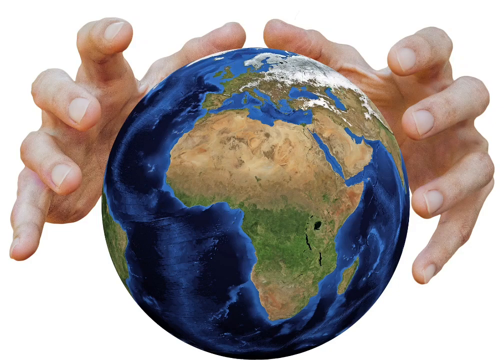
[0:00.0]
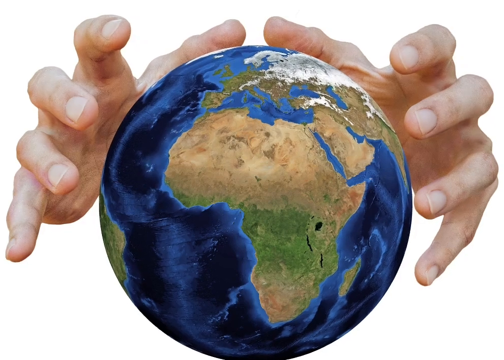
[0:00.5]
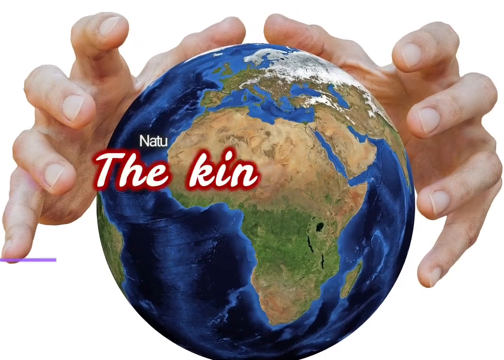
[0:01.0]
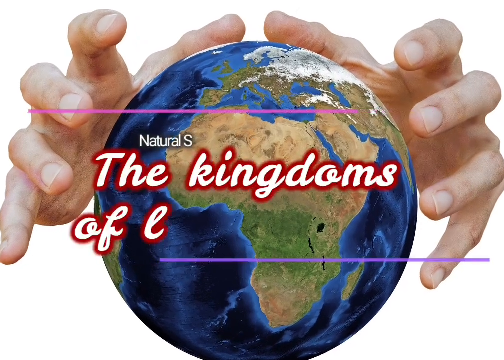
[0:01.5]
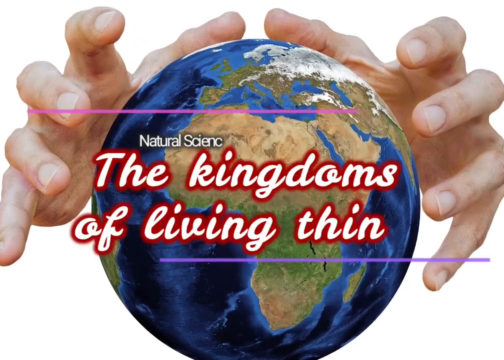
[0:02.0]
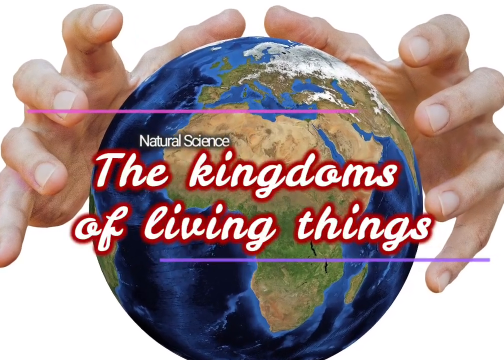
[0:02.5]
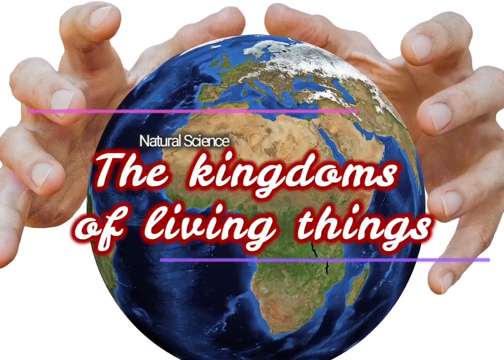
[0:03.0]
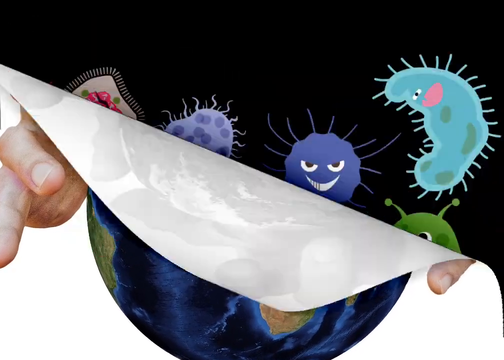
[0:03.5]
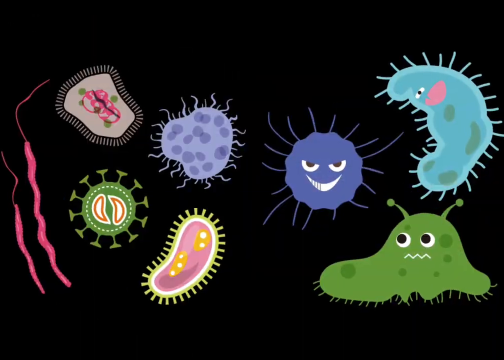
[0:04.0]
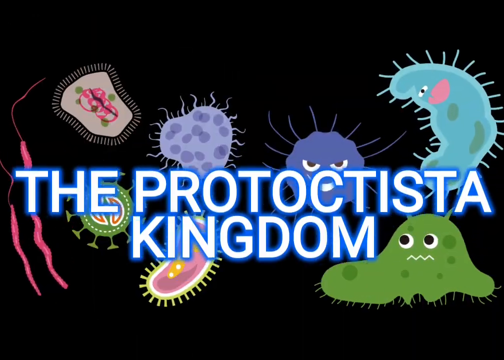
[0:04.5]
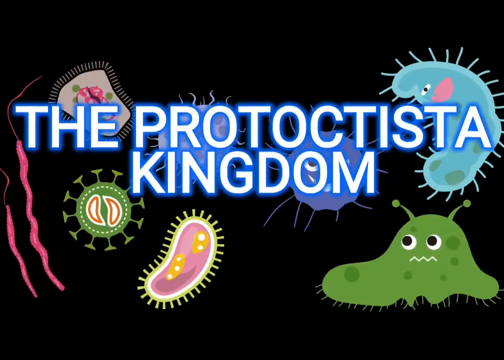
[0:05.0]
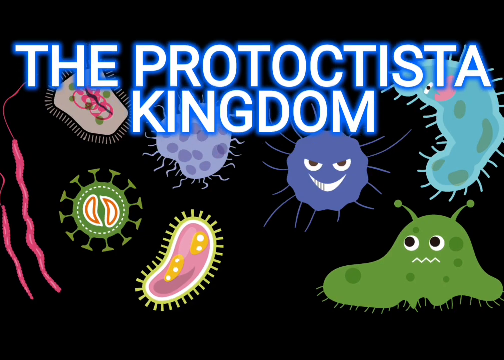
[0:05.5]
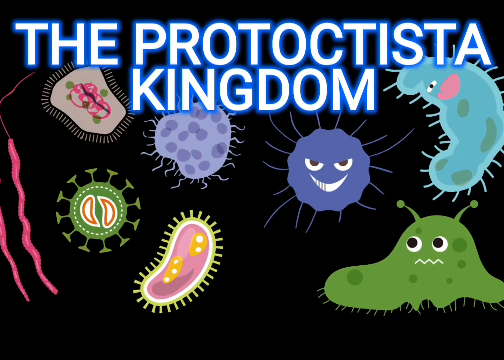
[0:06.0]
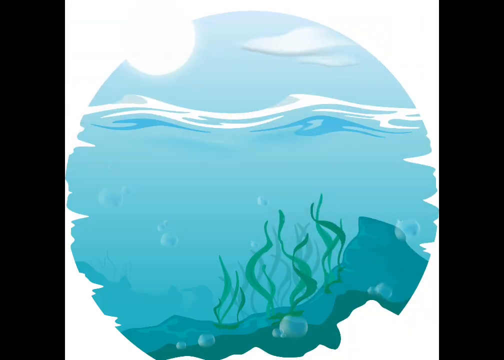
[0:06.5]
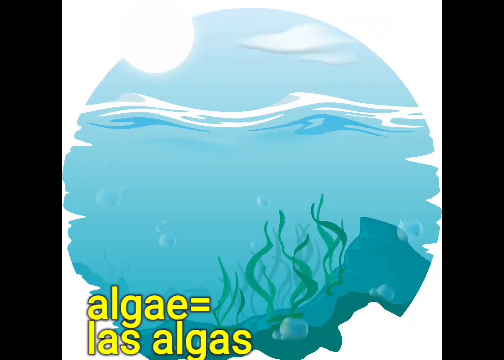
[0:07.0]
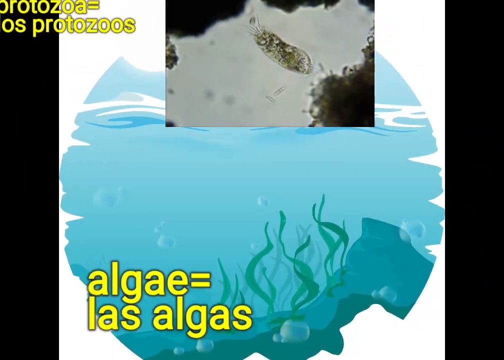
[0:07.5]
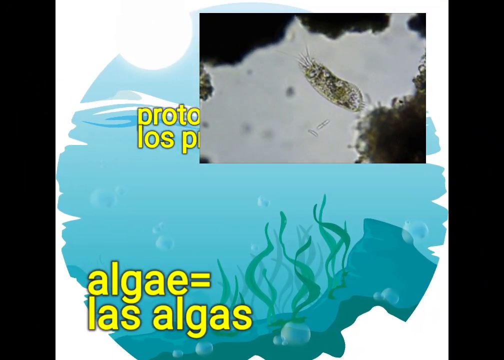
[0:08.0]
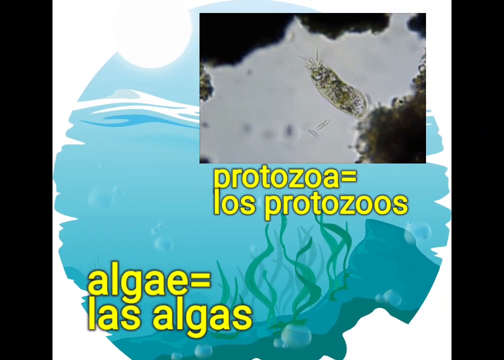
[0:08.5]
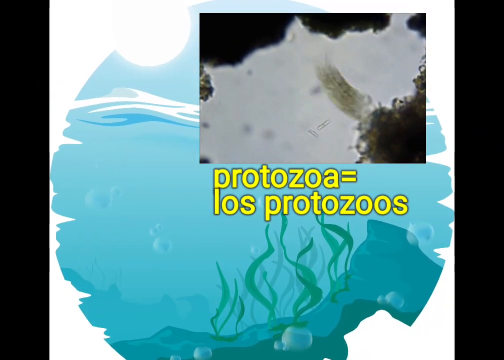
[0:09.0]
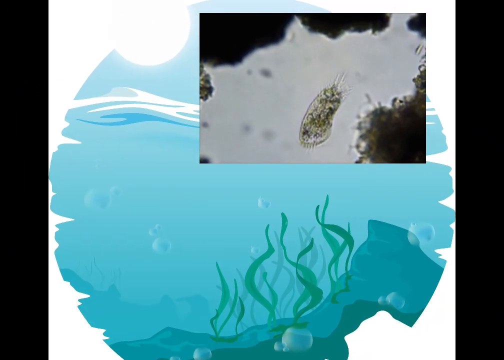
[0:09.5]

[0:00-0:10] The video opens with an intro showing giant hands on the earth, trying to dissect all the living creatures on earth.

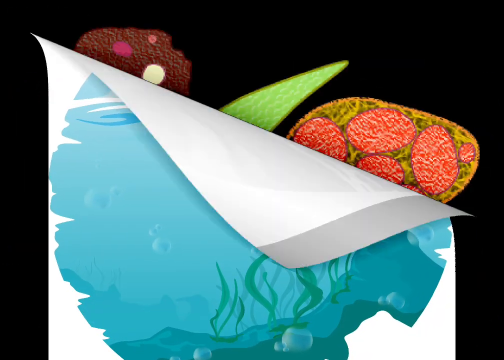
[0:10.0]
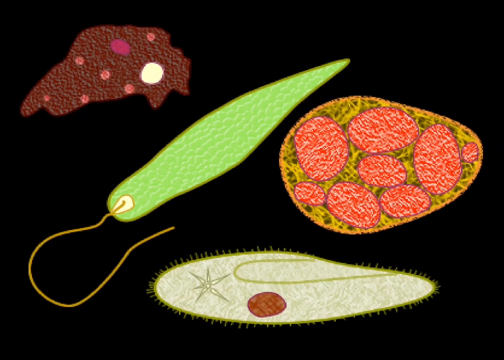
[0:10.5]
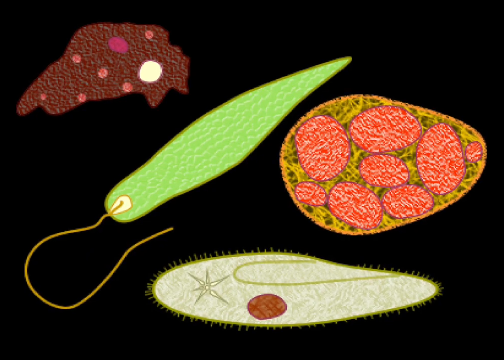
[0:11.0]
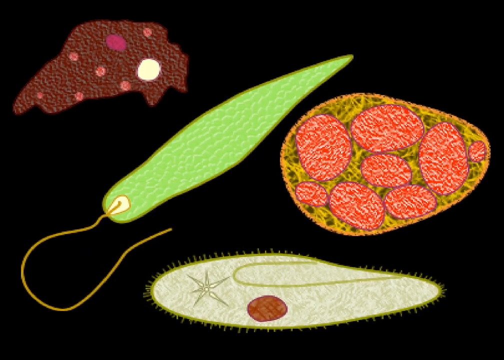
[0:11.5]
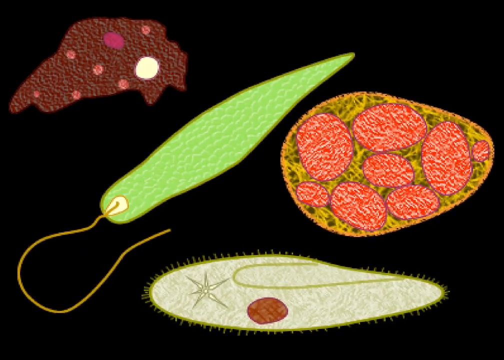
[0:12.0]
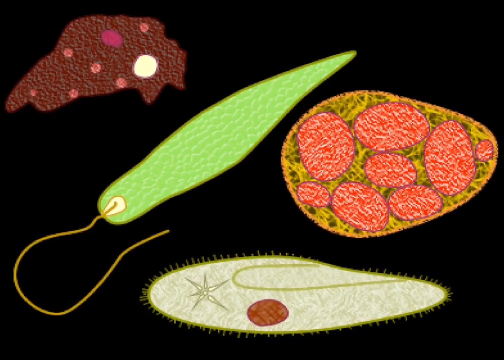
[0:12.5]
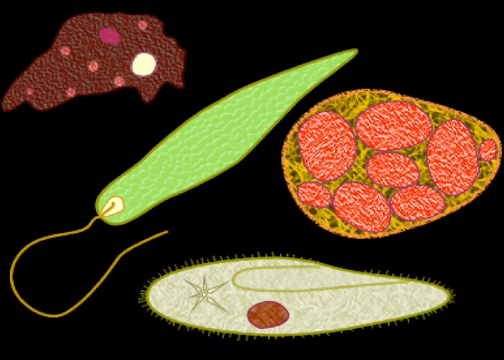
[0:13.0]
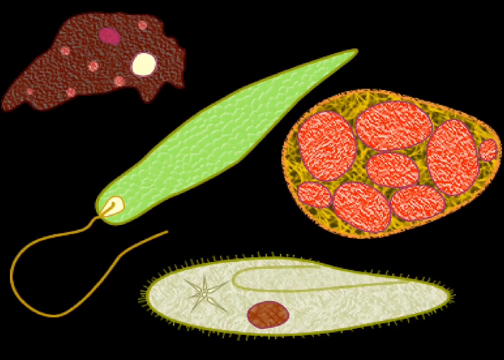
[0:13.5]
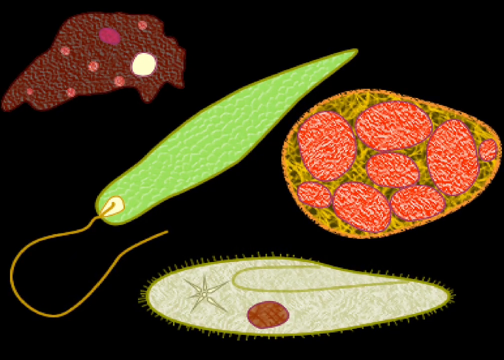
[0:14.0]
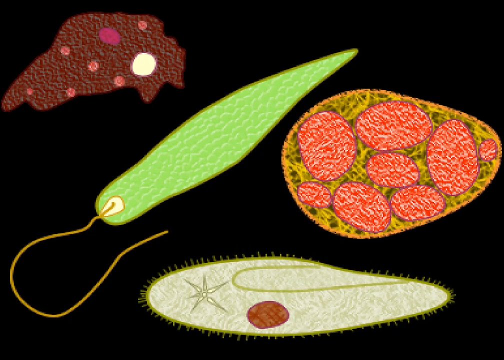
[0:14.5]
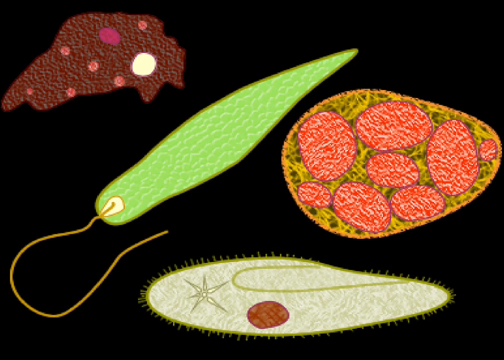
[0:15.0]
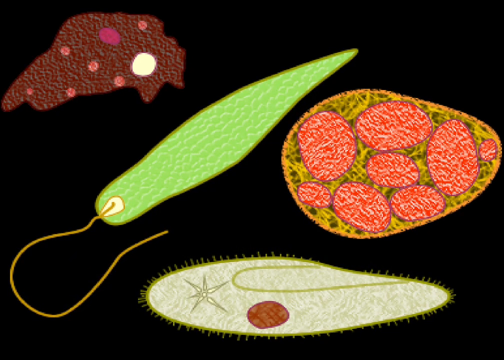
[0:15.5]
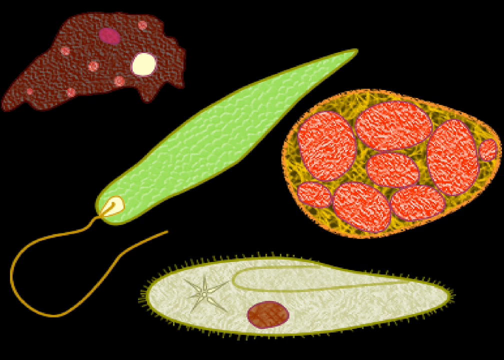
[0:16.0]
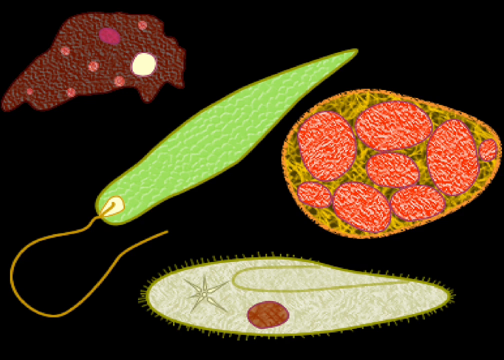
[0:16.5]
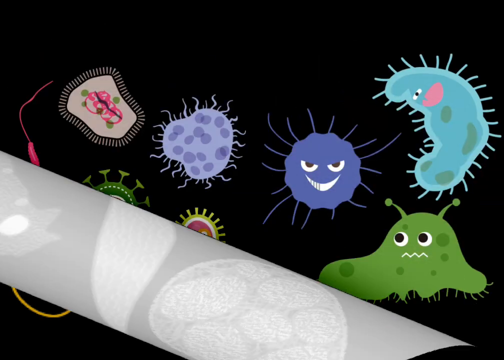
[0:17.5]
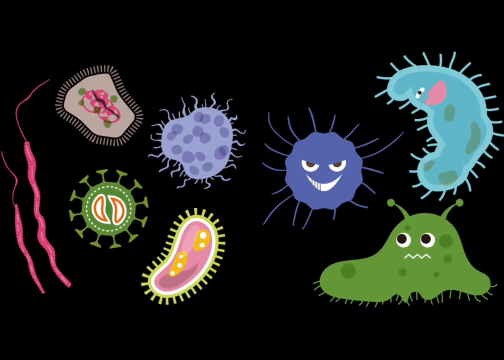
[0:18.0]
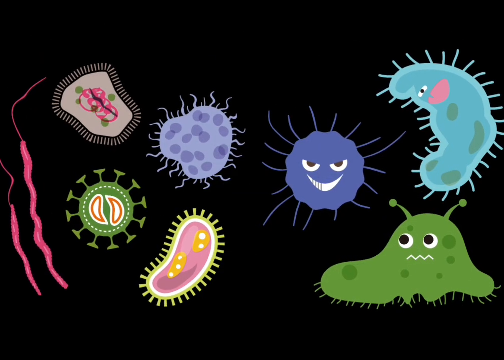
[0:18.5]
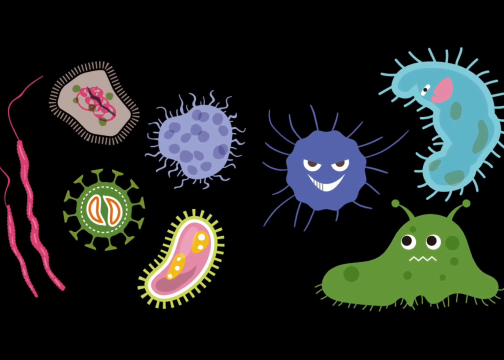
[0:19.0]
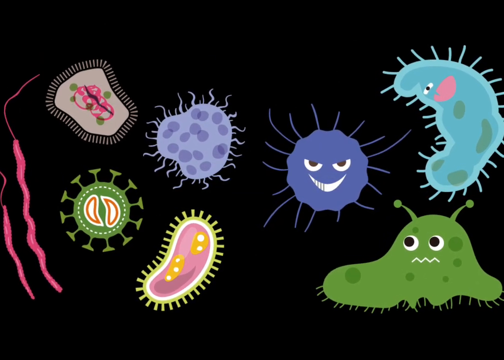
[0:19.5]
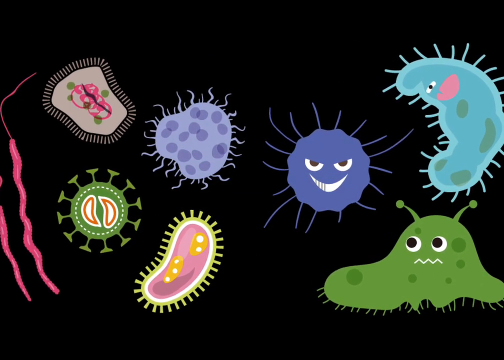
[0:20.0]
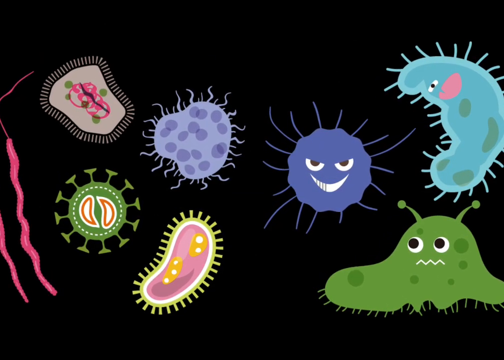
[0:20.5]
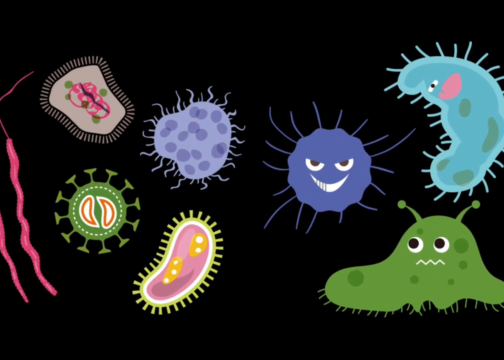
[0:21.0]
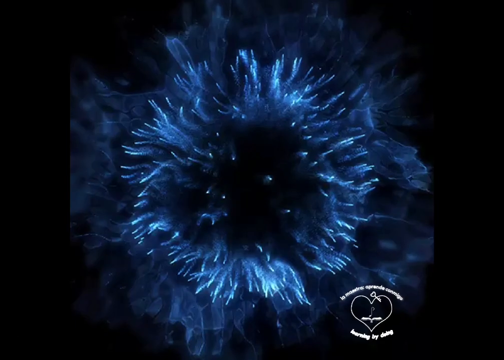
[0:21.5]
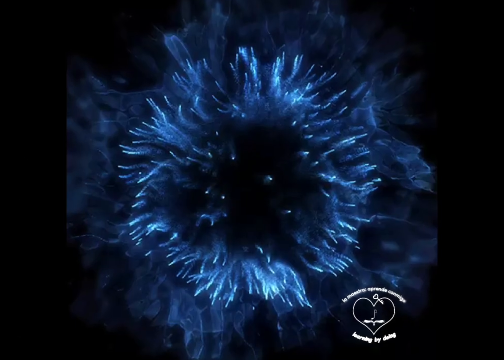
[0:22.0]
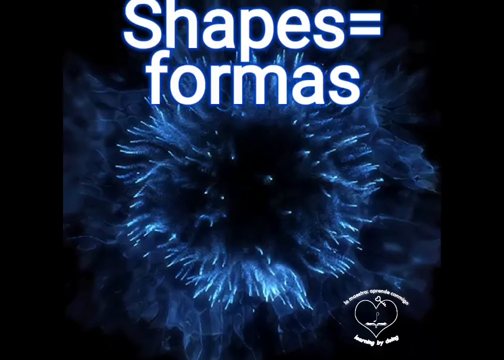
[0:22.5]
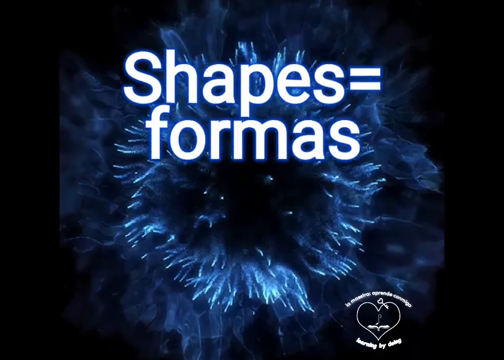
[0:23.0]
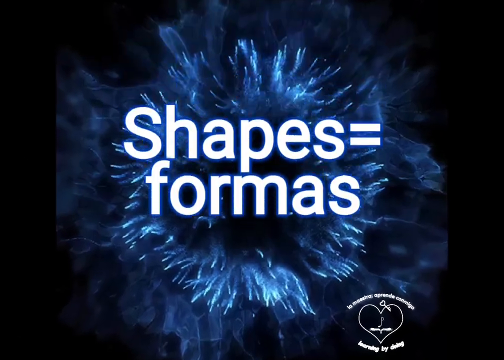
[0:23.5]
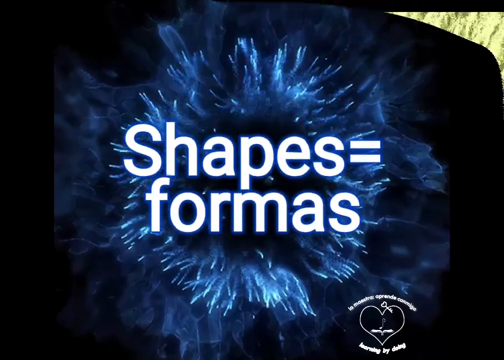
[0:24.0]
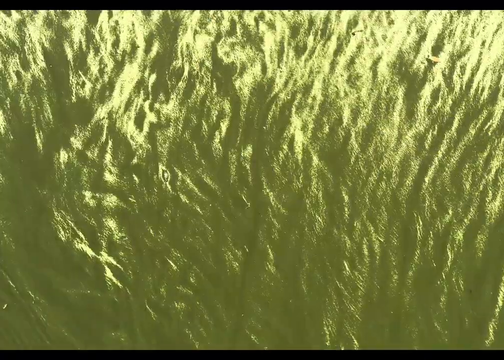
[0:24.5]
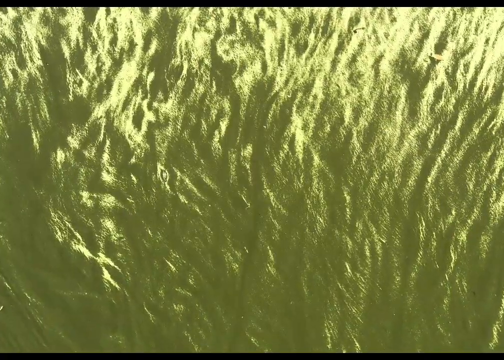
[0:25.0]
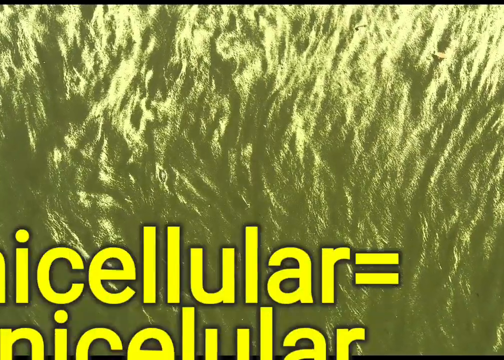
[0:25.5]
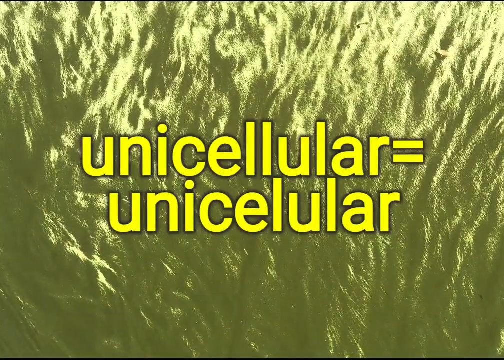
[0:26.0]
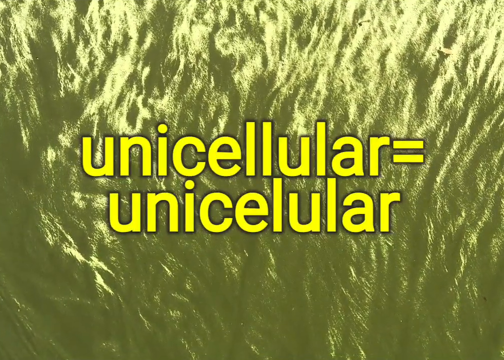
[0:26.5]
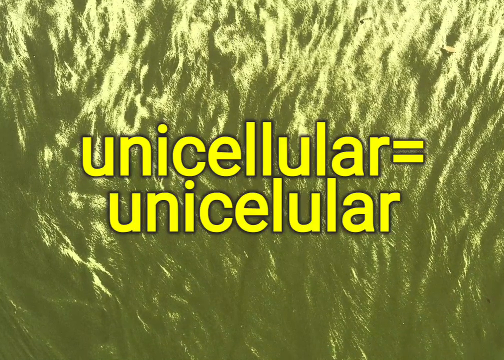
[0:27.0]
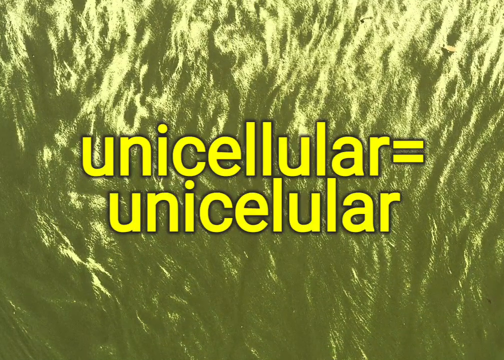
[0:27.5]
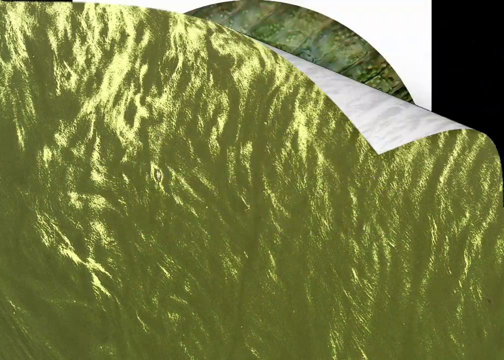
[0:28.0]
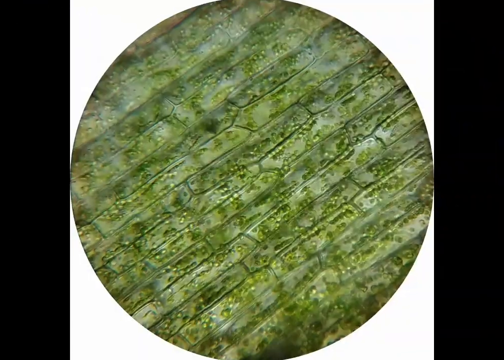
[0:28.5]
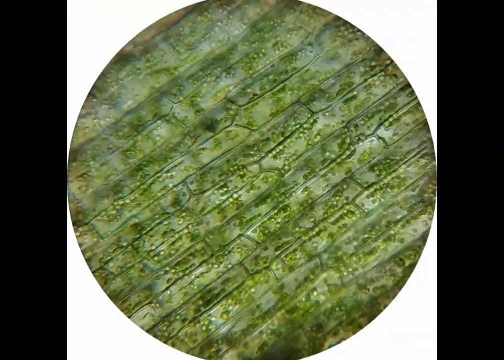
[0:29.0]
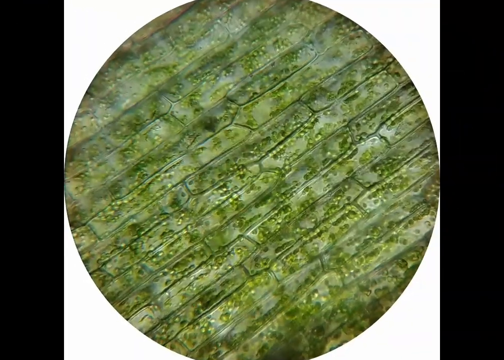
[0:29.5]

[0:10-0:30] The video takes a more in-depth look at microorganisms, covering their different shapes, colors and appearances as well as their cell structures.